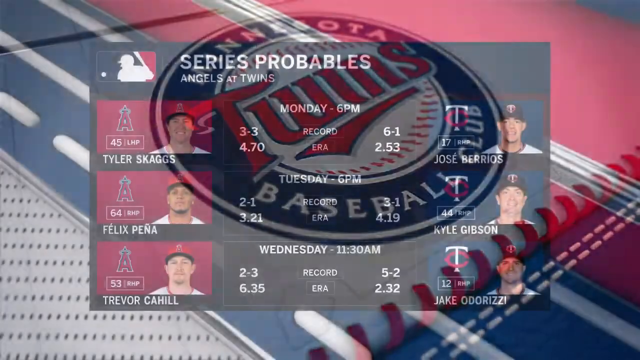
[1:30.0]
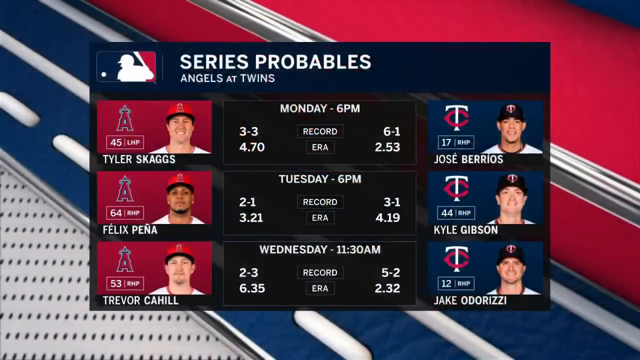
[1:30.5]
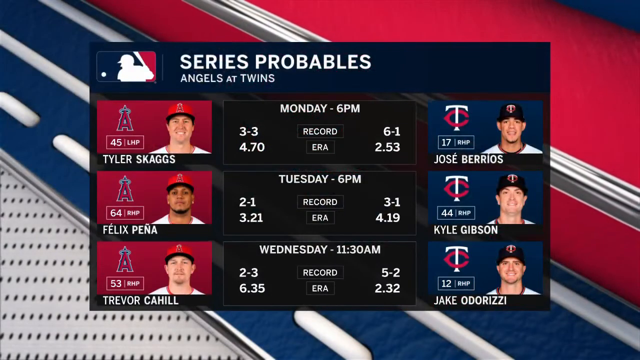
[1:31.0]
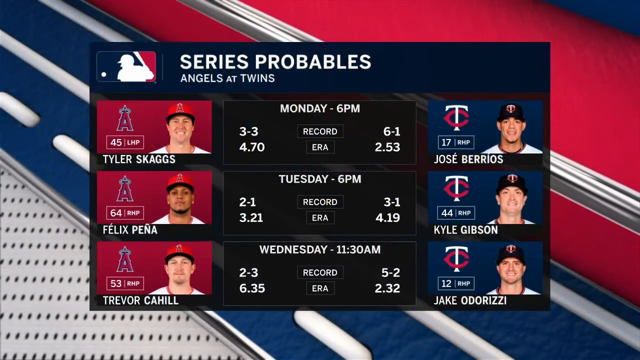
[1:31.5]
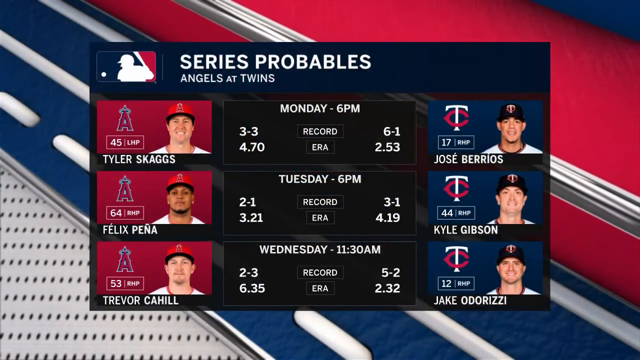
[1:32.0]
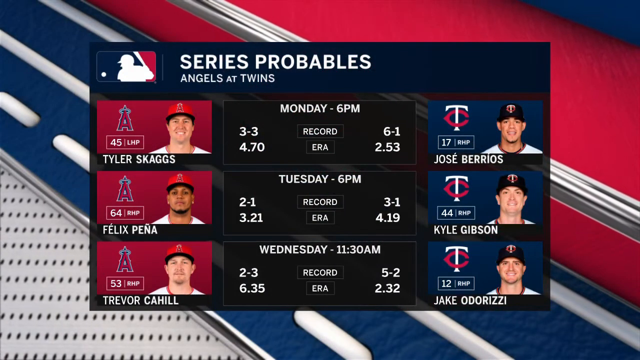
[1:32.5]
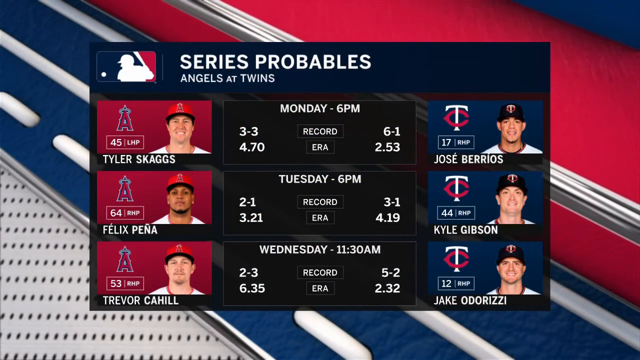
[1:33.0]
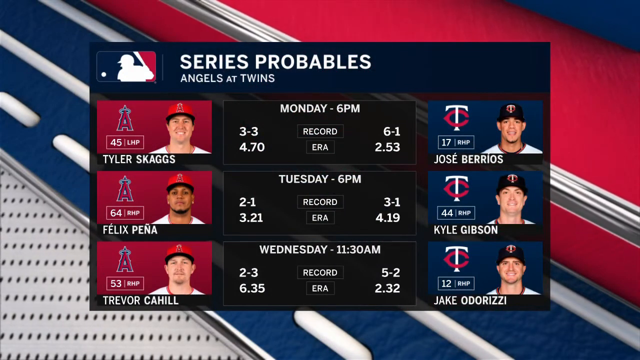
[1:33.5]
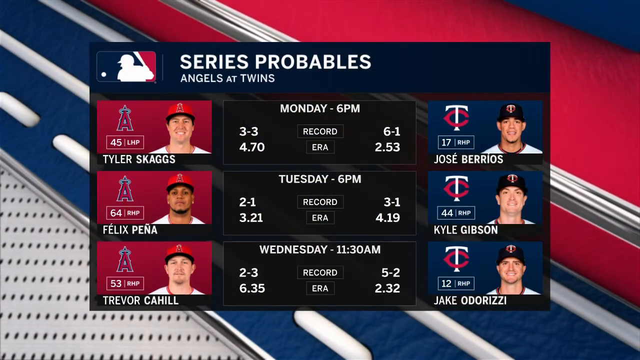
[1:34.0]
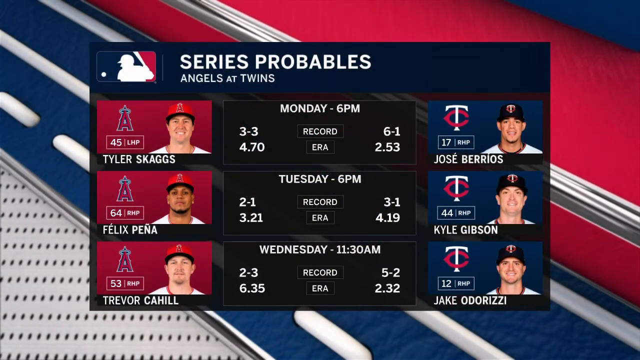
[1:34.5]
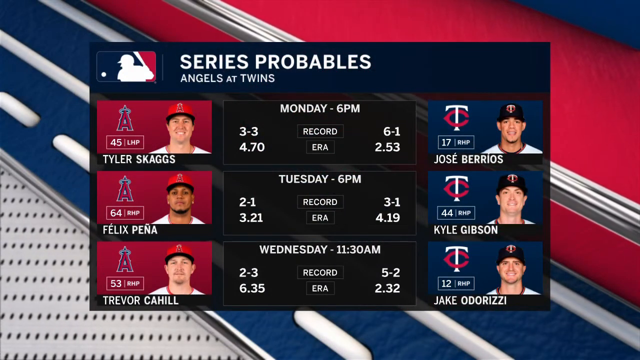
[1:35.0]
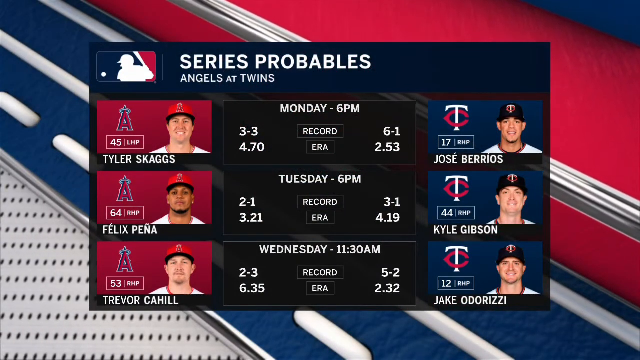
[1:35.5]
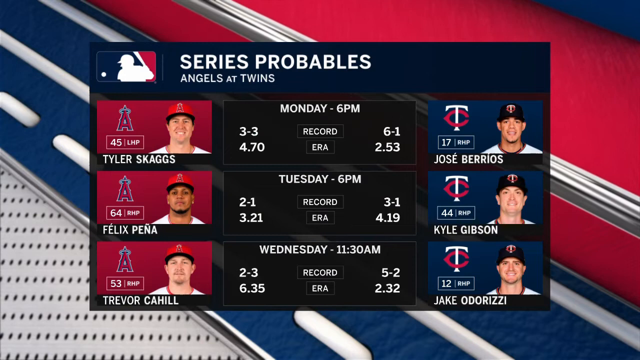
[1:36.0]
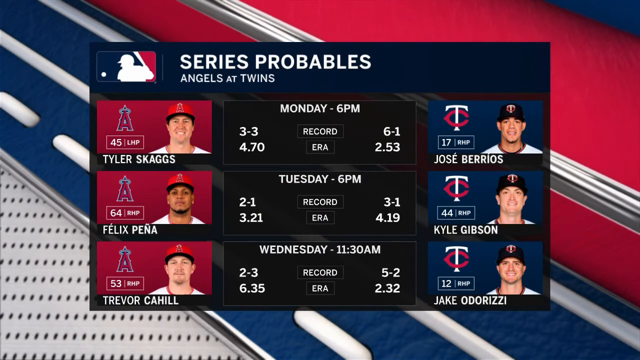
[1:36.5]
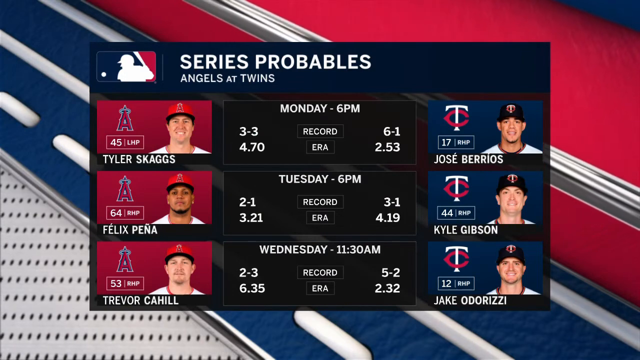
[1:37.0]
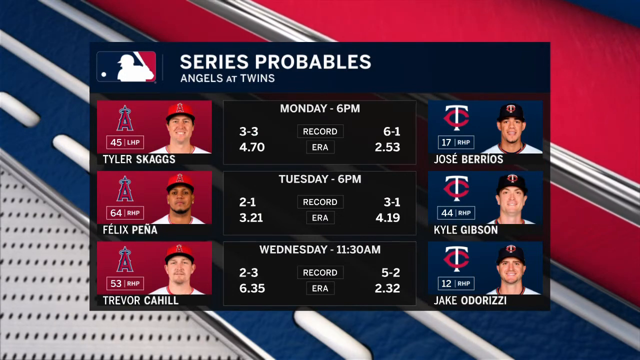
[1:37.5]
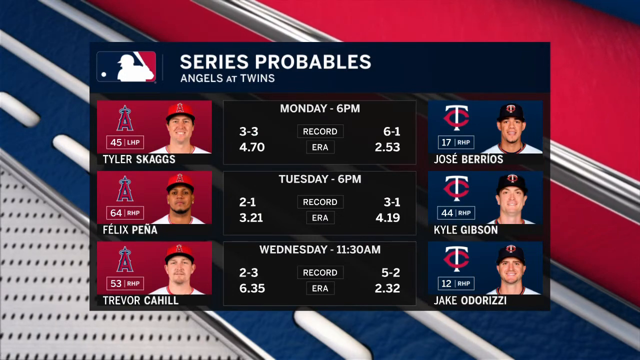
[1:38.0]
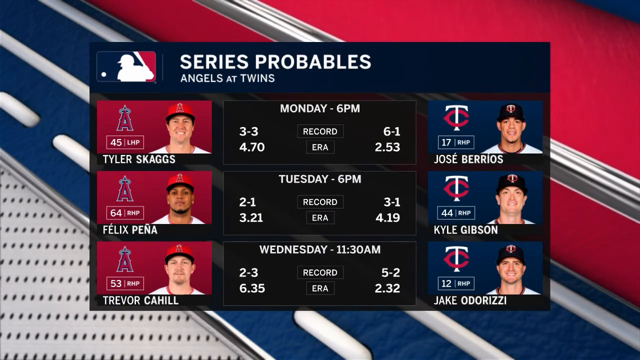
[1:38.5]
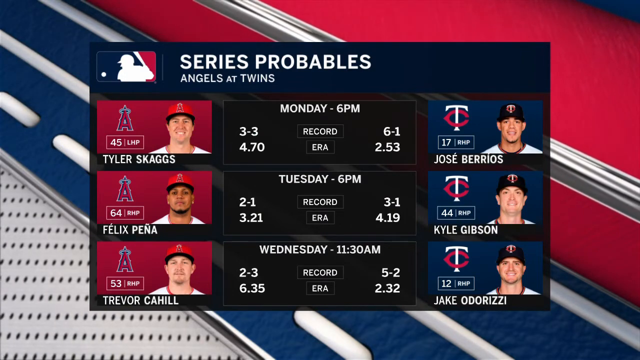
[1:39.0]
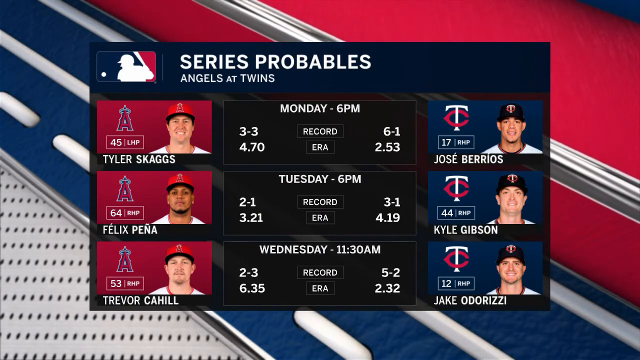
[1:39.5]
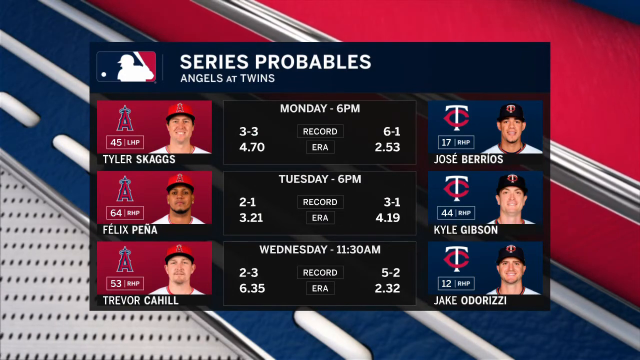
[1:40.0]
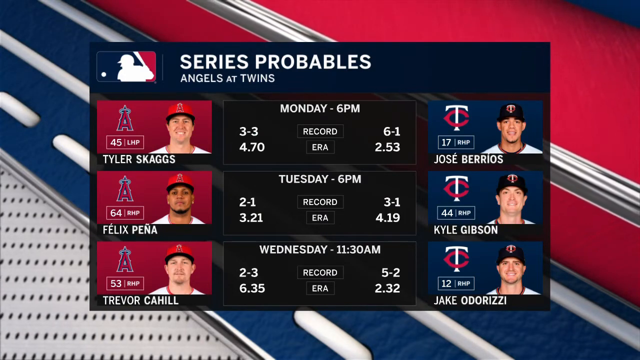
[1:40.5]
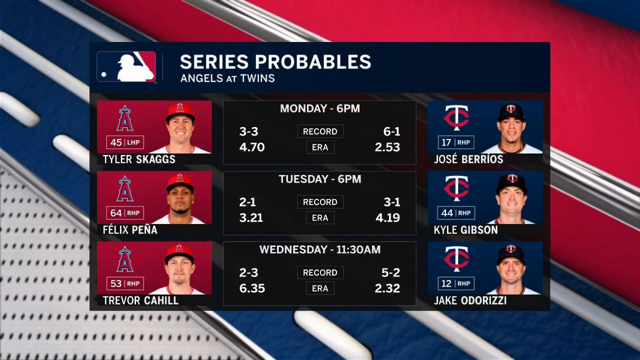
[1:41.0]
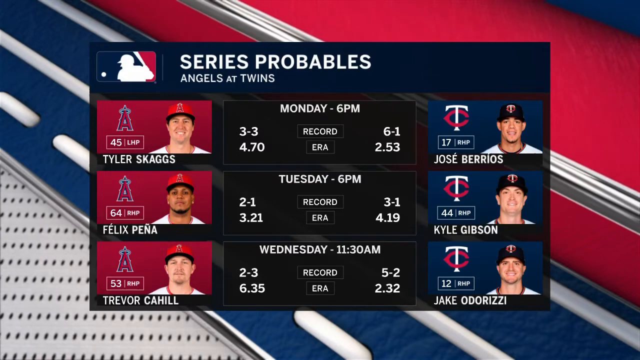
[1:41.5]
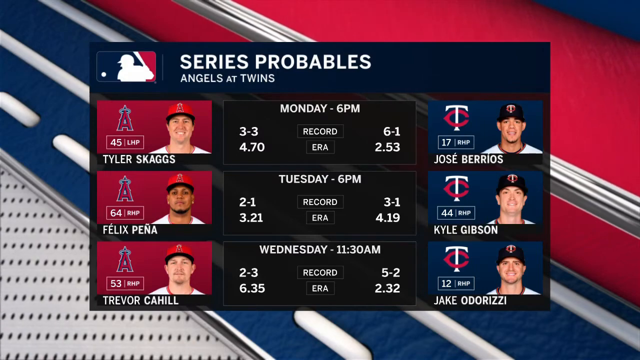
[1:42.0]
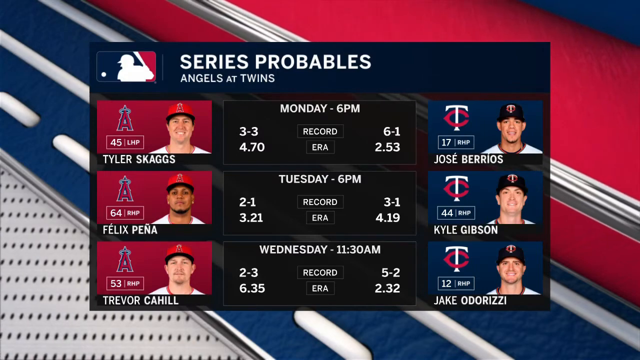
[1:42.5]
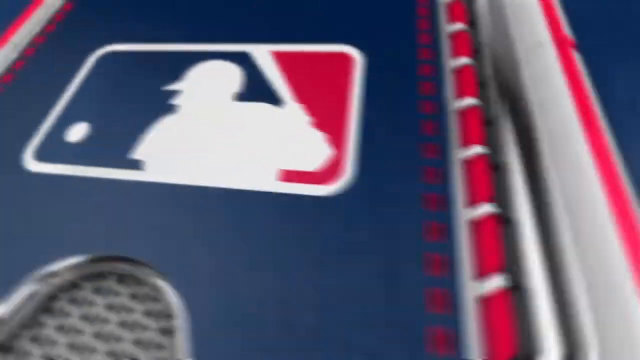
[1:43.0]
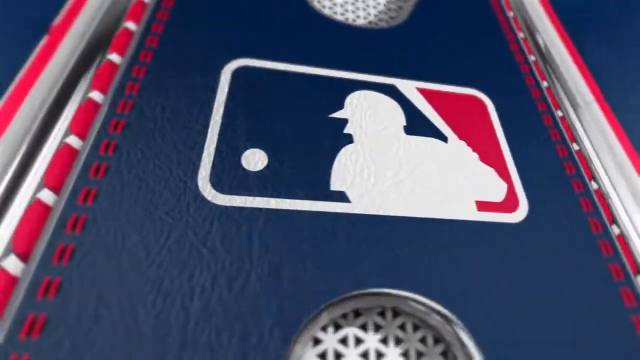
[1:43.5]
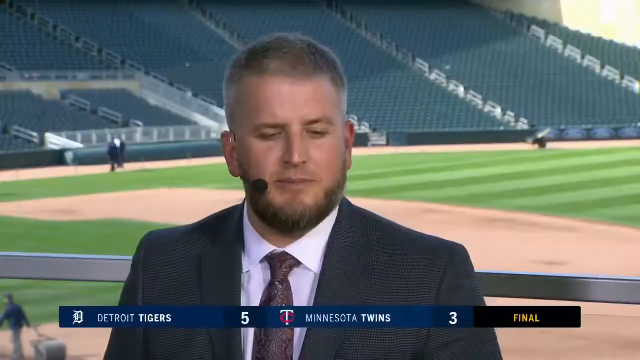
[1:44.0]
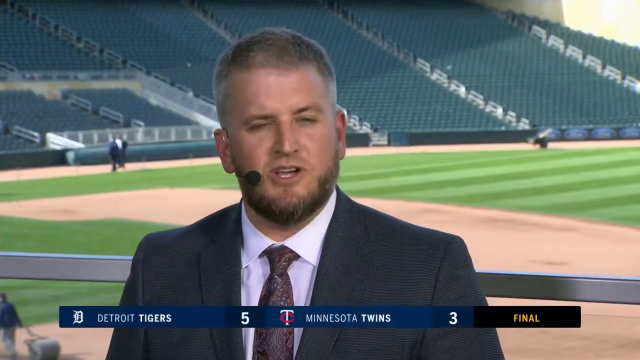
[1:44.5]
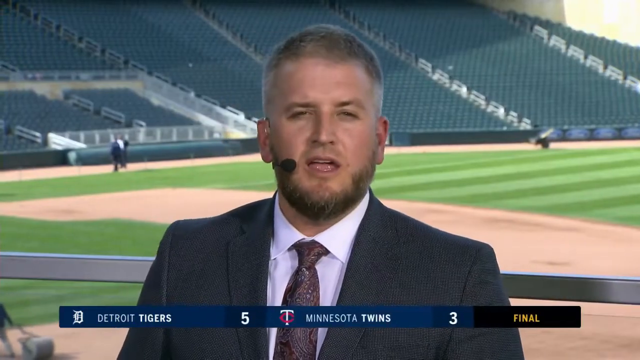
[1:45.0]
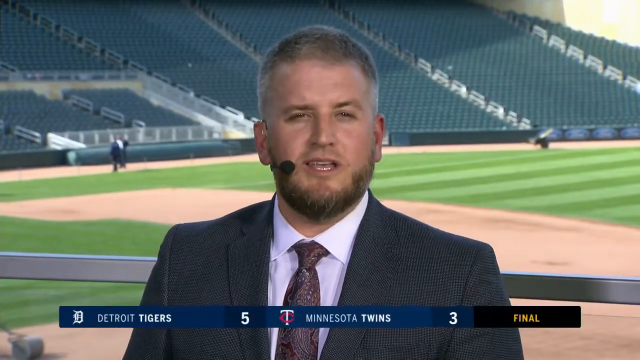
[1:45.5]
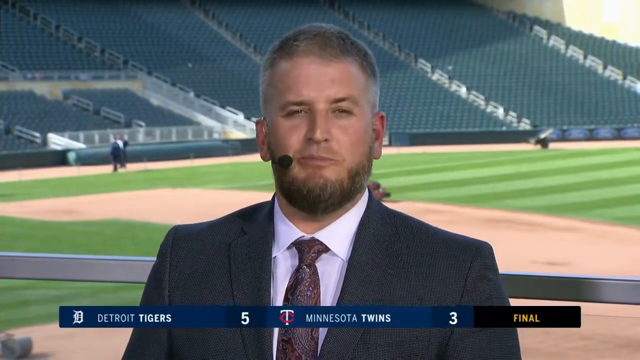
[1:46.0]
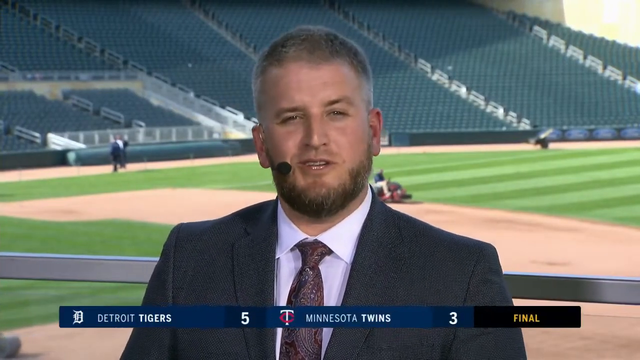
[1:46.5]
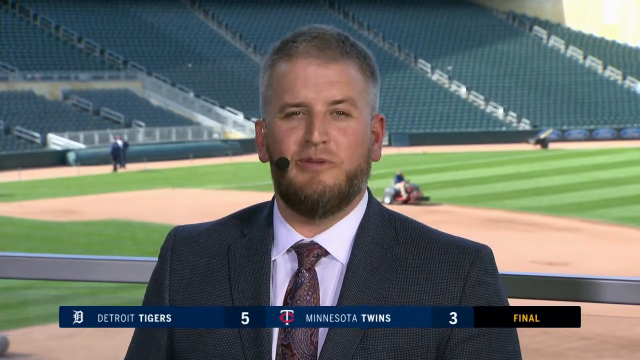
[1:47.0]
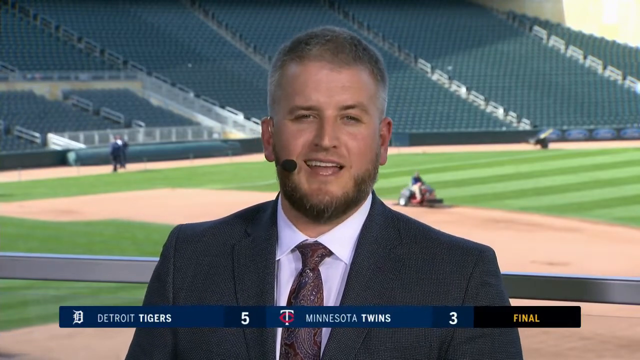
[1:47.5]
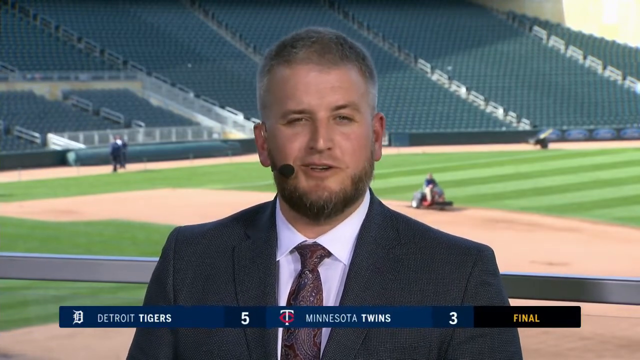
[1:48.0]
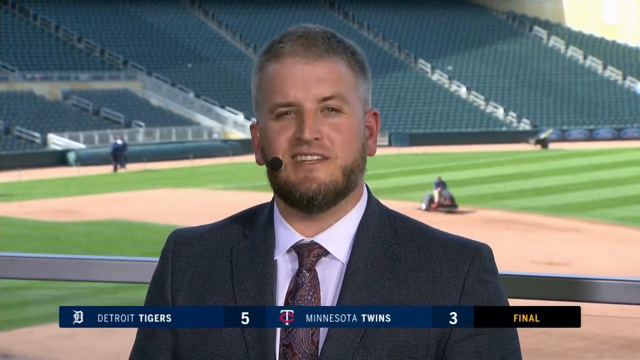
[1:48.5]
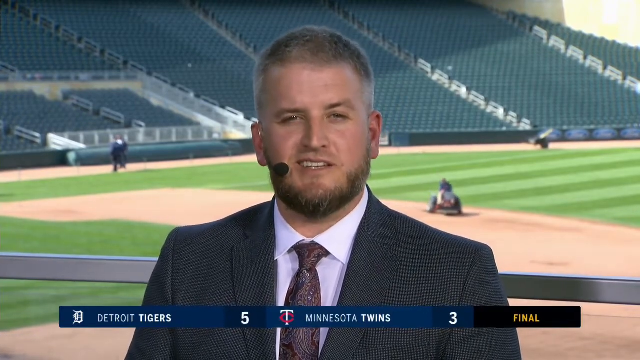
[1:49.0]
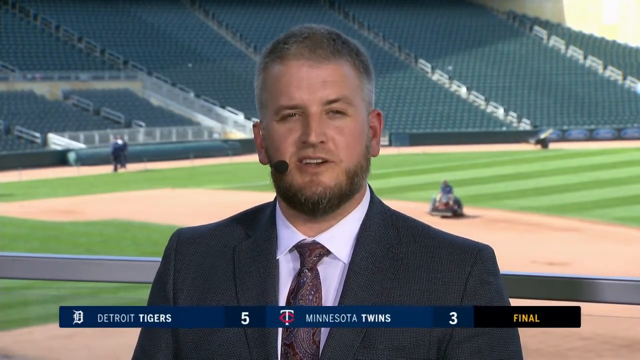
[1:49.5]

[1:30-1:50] A list of probable pitchers appears for the coming three games, in which the Twins play the Angels: Monday night, Tuesday night and Wednesday, with Wednesday's game listed as an 11.30 start. Two vertical rows of three pitchers each are shown, the Angels' pitchers on the left and the Twins' pitchers on the right, with the pitchers' records and ERAs in a vertical column between them in white font on a black background. A slow-moving animation in the background shows blue, silver, white and dark black moving up and down while the pitching information stays on screen. The man with the unkempt beard then reappears, now about 60 feet lower in the stands than before, suggesting he is superimposed over a background from a different camera. He speaks into the camera; he has rather narrow dark brown eyes and a nice smile as he speaks.